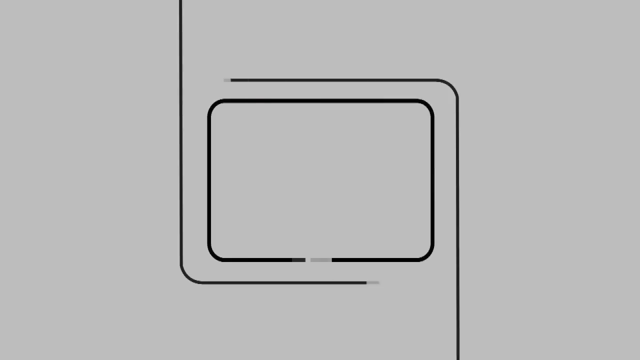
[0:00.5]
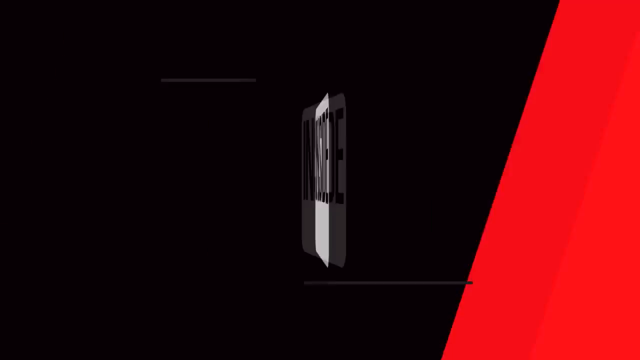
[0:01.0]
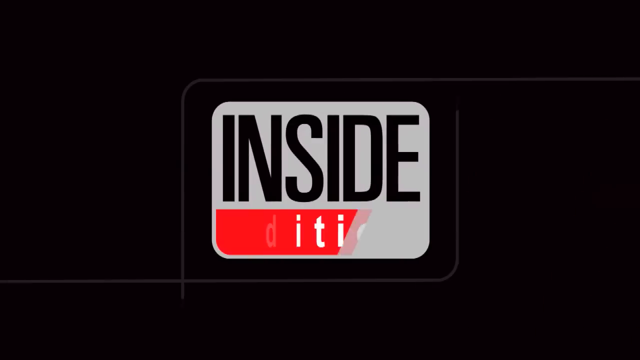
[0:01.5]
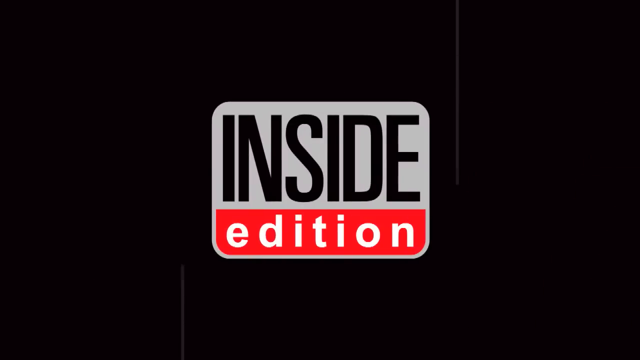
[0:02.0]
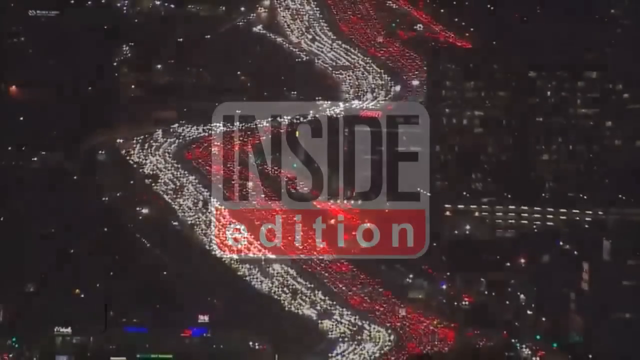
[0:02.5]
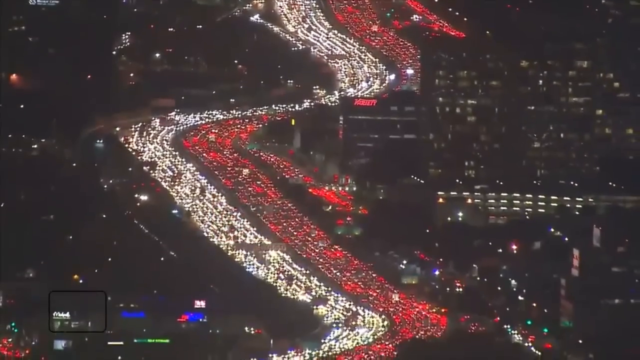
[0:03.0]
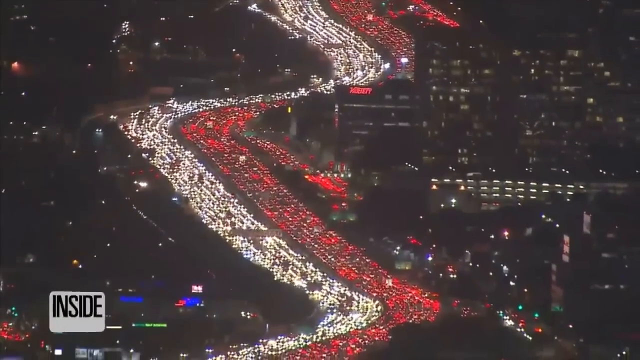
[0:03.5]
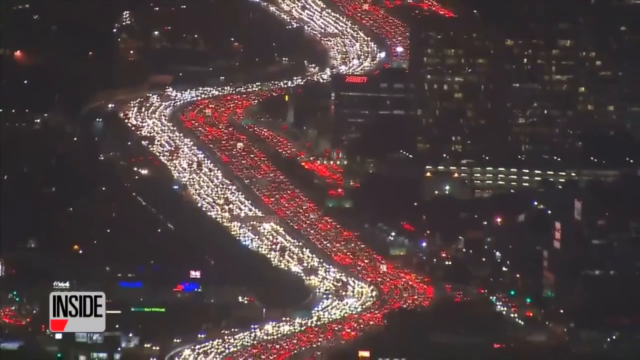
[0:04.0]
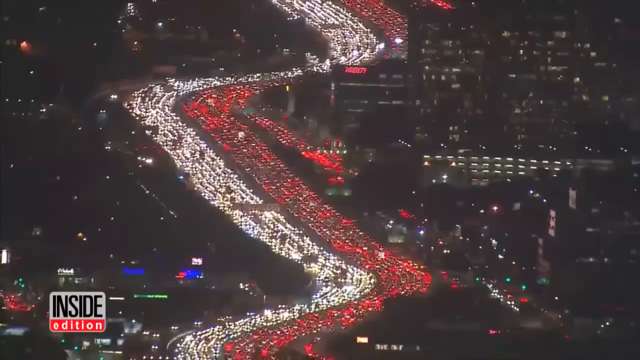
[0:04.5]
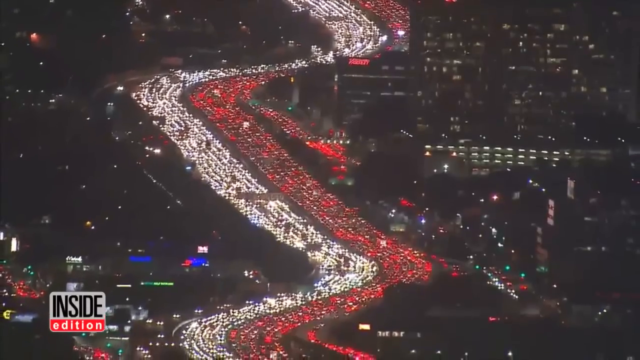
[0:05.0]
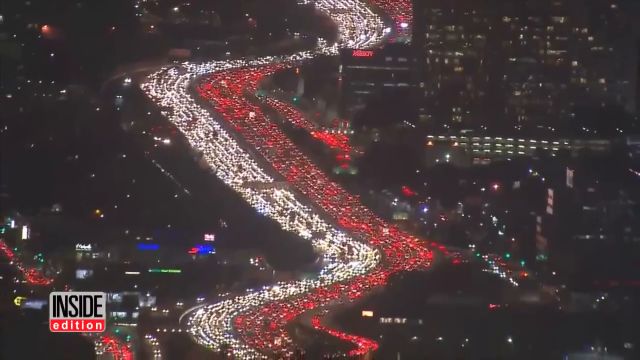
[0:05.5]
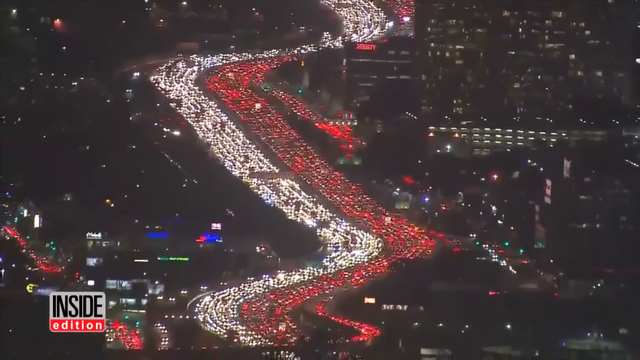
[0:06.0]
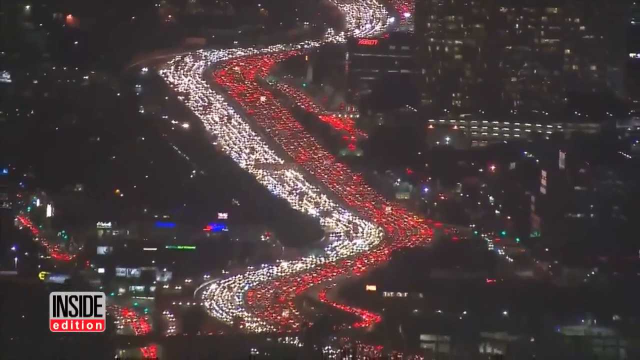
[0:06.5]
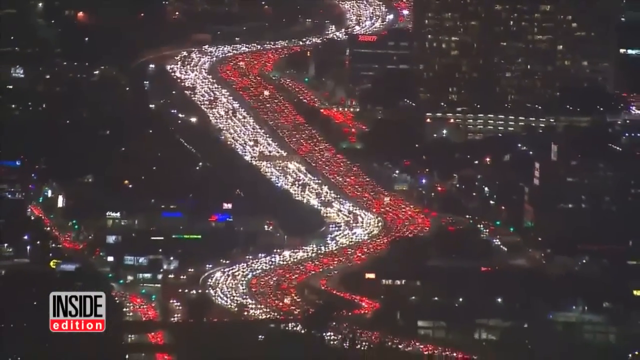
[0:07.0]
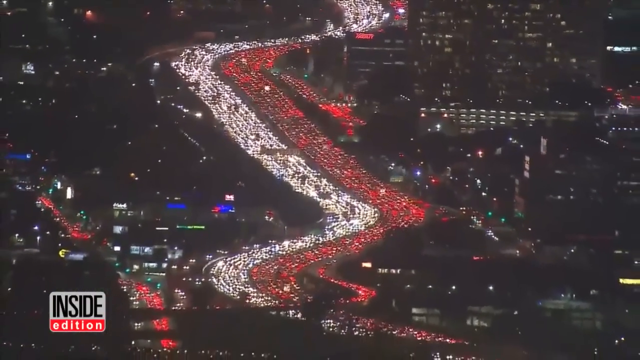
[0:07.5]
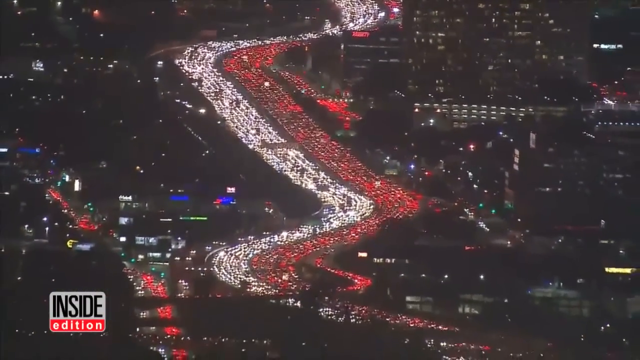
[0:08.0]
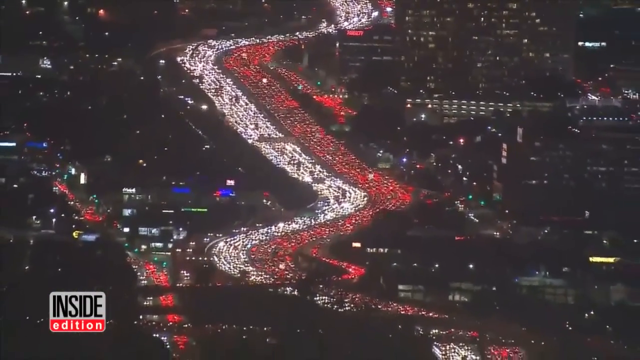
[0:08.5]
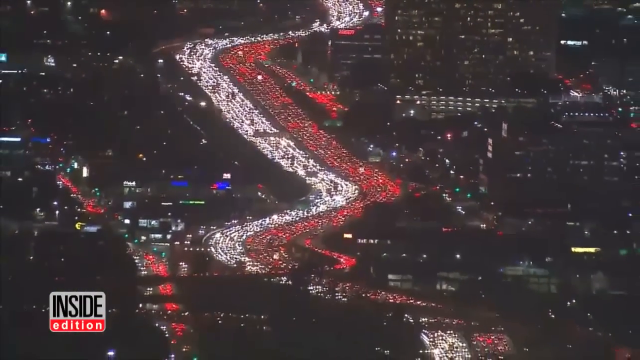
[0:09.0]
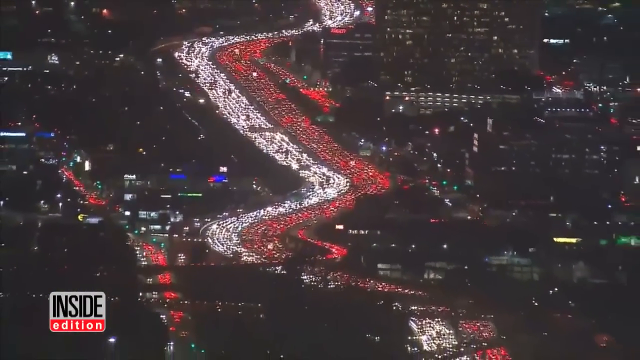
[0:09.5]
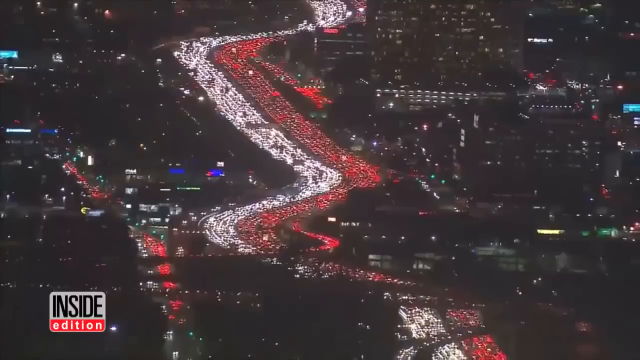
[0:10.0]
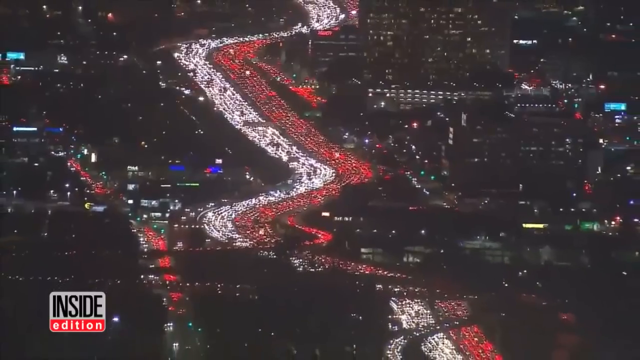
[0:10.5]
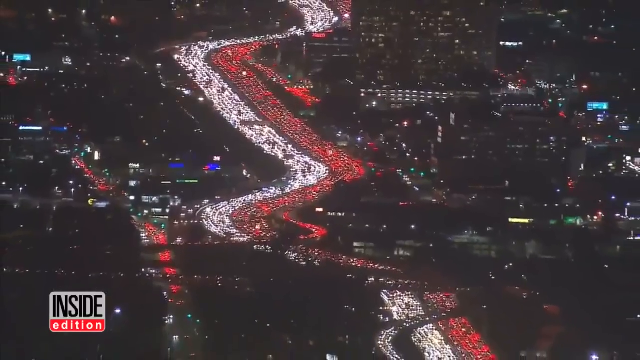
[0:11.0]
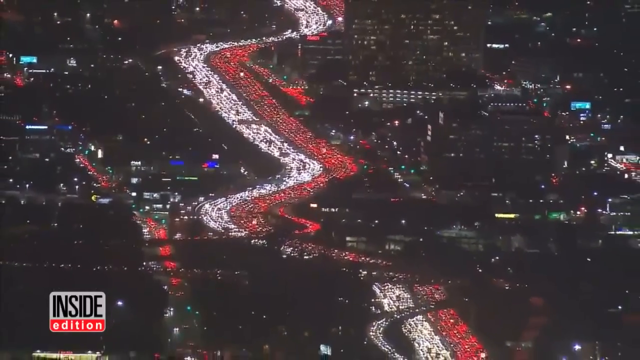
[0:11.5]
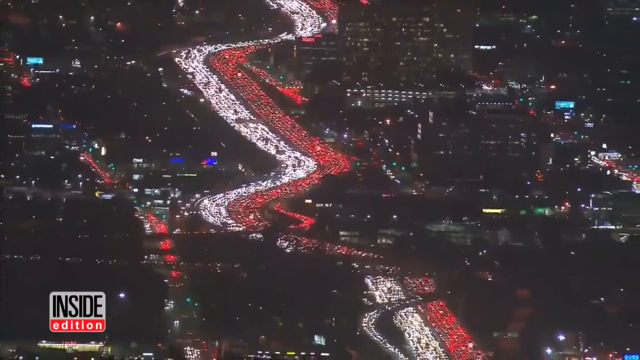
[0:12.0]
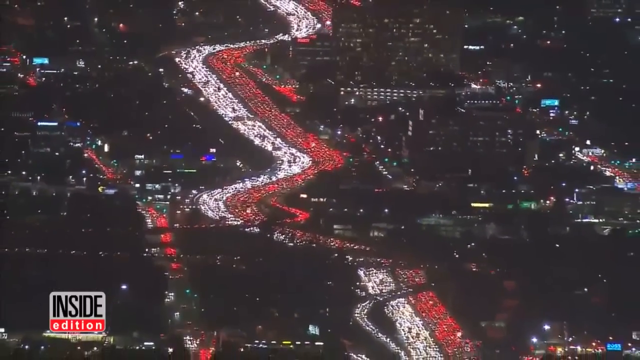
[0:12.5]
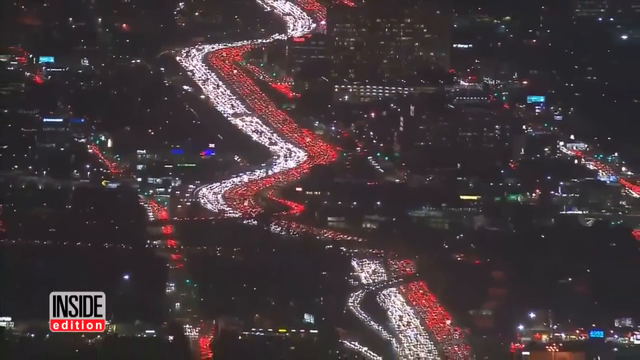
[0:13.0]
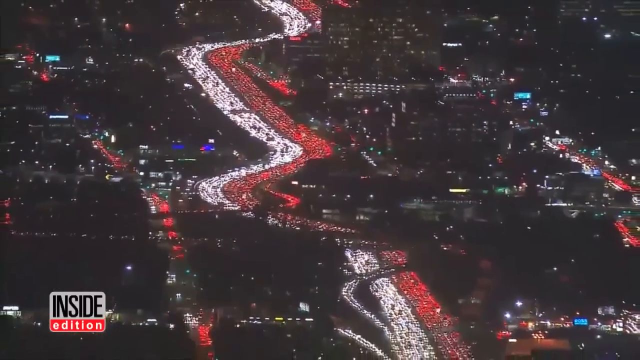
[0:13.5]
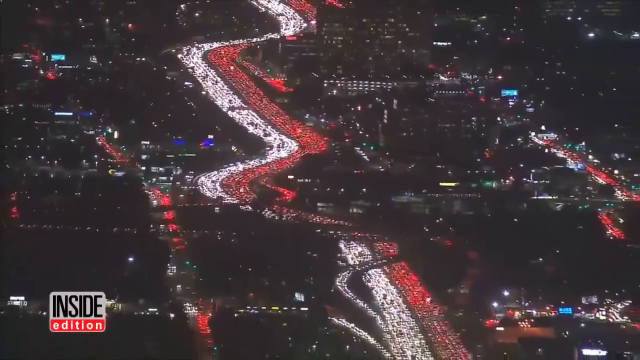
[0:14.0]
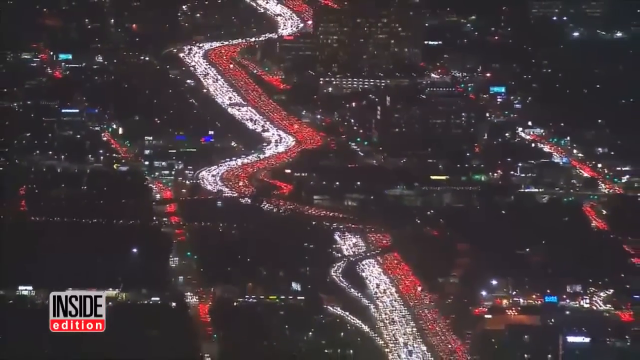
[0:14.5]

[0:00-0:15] The video opens with the Inside Edition logo: on a black screen there is a white, sort of rounded rectangle with the logo, "Inside" in black and a red banner with white text reading "Edition". Next comes a slowly zooming-out shot of what looks like a pretty bad traffic jam, with hundreds and hundreds, maybe even thousands, of lights back to back: white headlights on one side of the freeway and red brake lights on the other. The jam stretches quite far, all through the city, and the view keeps zooming out further and further. It is very late at night, and there are a lot of city lights and many tall commercial buildings in what is clearly a very busy city center.